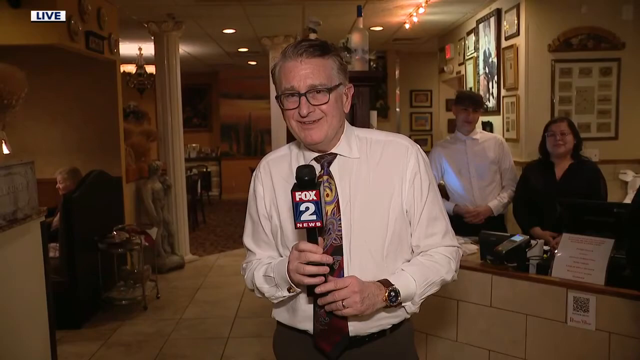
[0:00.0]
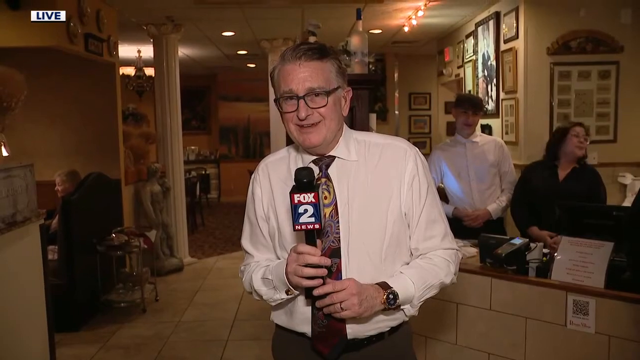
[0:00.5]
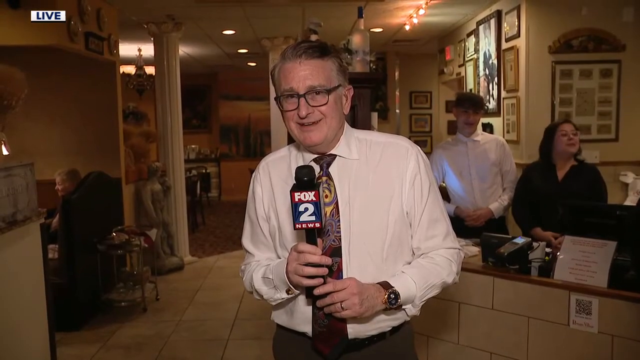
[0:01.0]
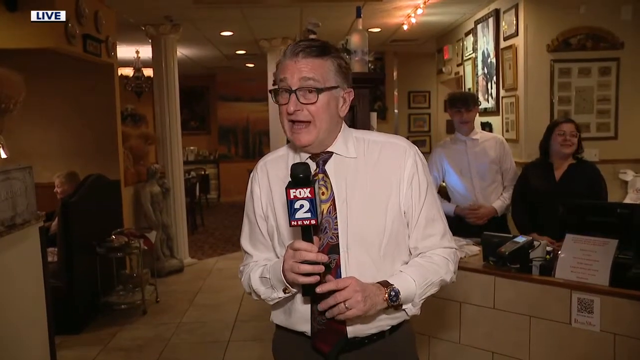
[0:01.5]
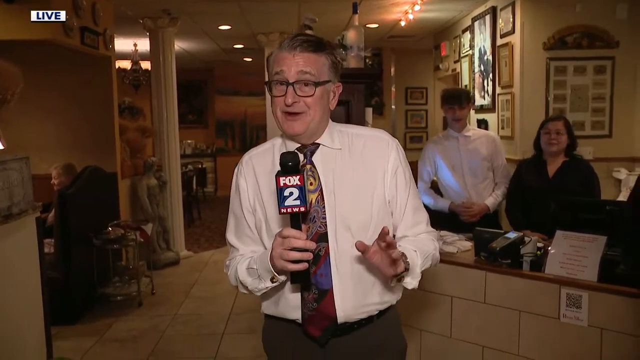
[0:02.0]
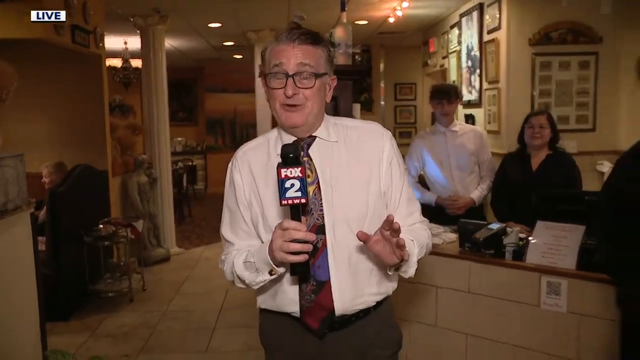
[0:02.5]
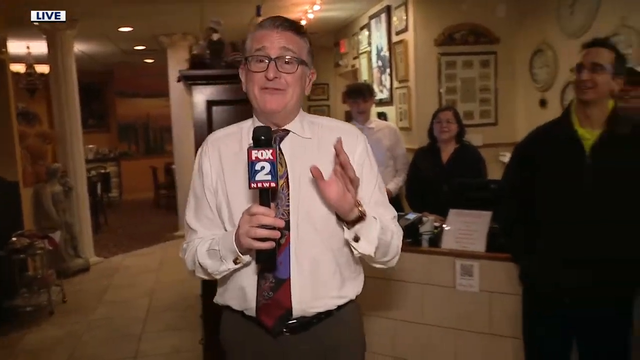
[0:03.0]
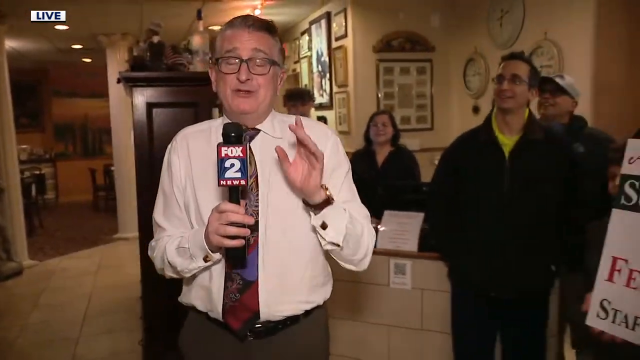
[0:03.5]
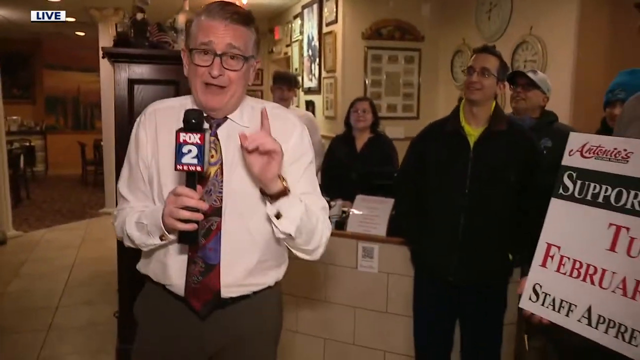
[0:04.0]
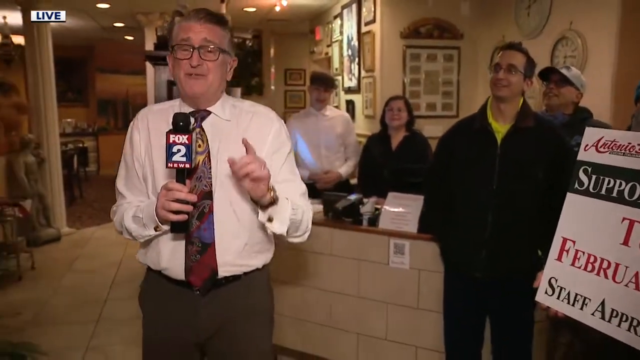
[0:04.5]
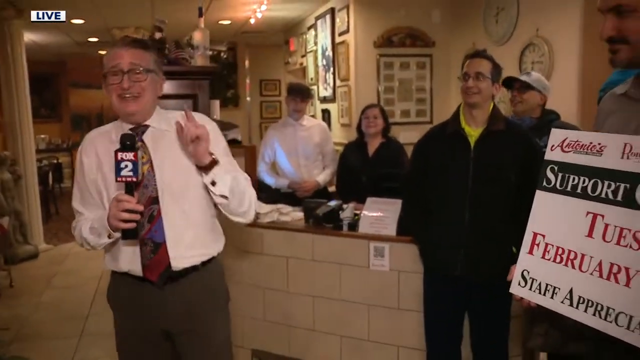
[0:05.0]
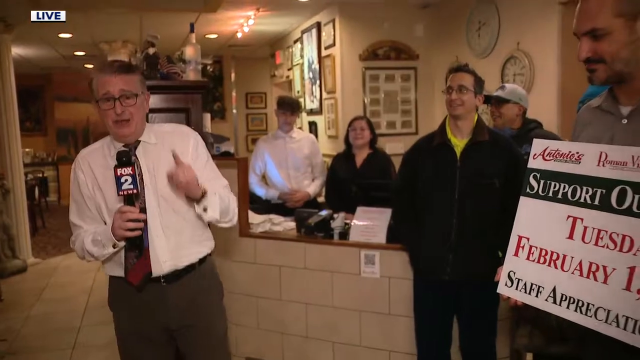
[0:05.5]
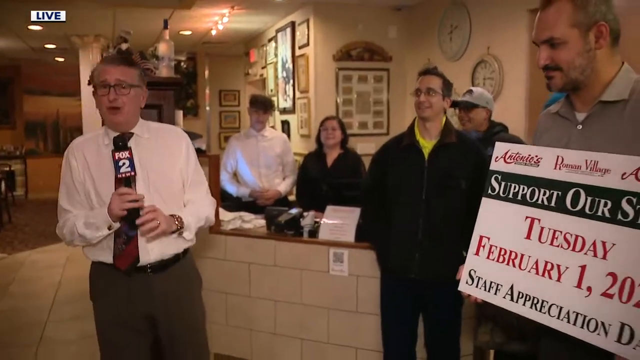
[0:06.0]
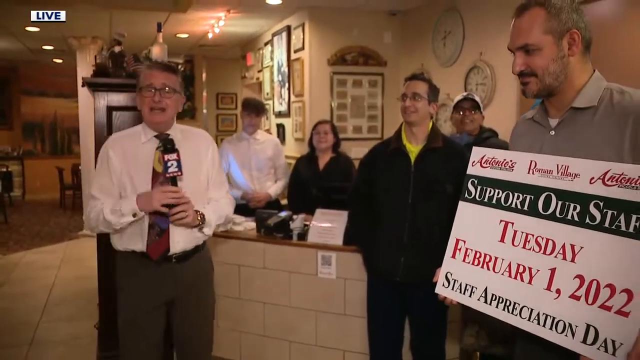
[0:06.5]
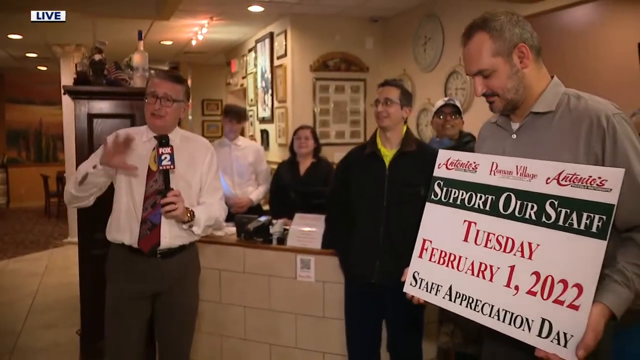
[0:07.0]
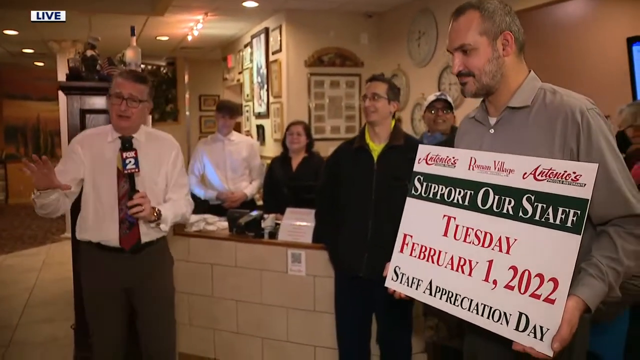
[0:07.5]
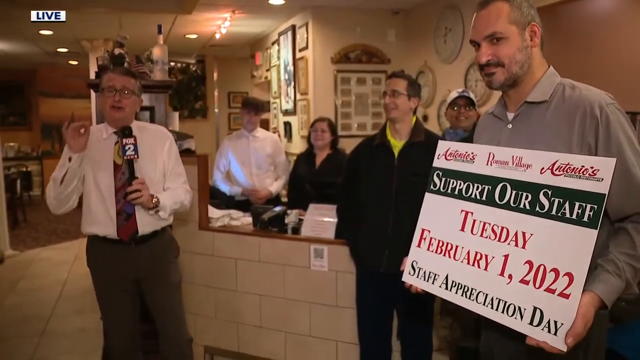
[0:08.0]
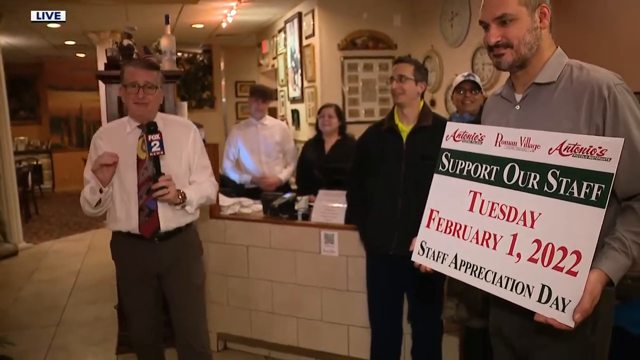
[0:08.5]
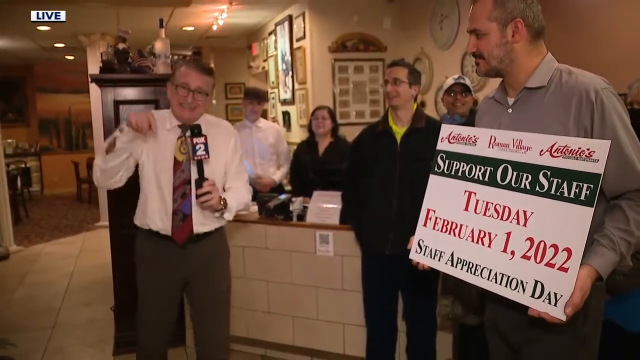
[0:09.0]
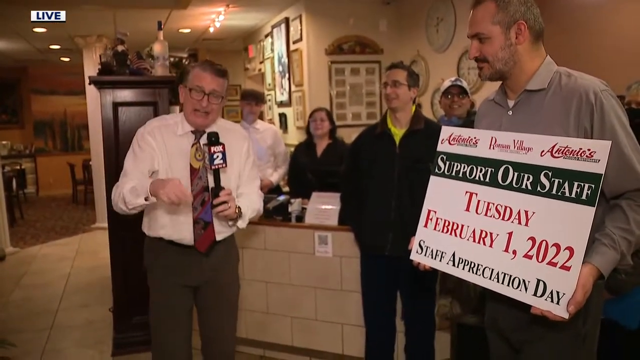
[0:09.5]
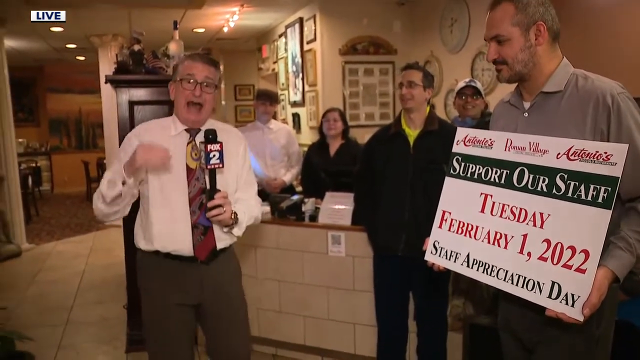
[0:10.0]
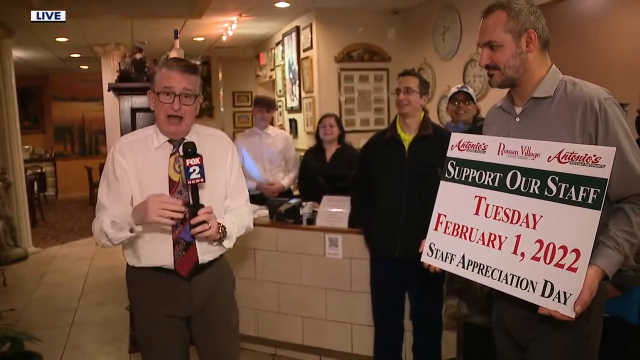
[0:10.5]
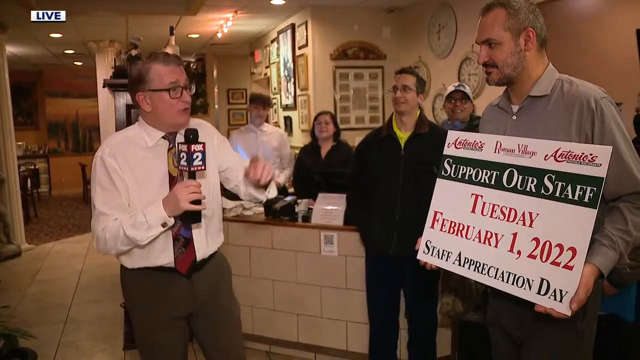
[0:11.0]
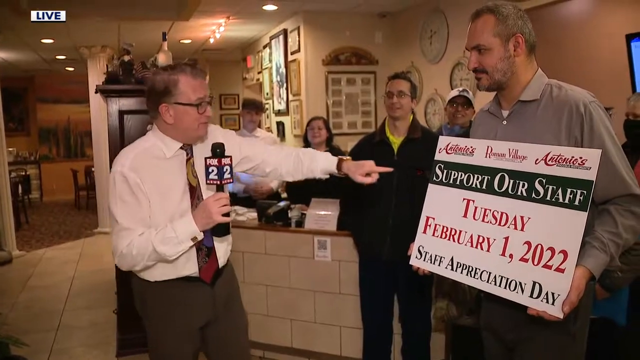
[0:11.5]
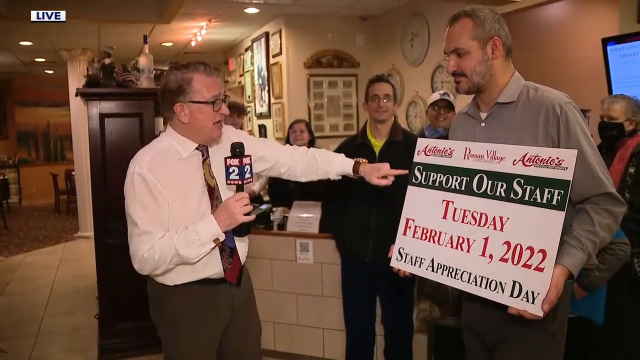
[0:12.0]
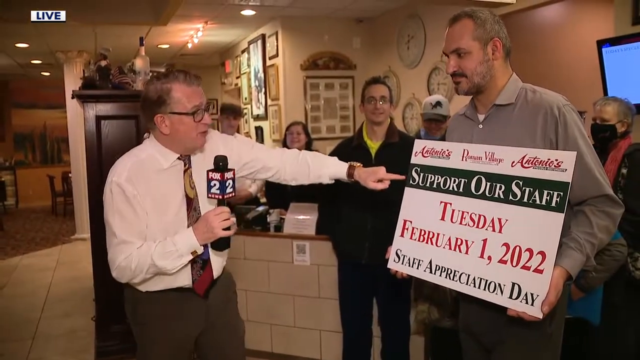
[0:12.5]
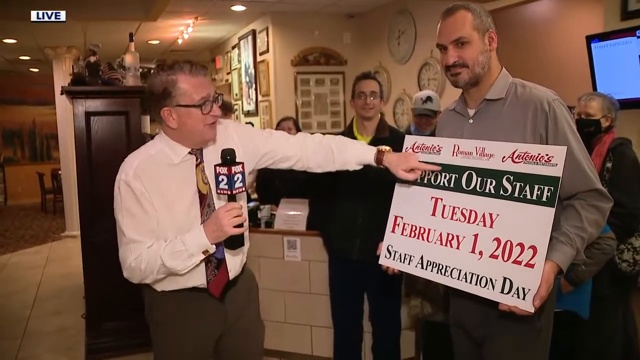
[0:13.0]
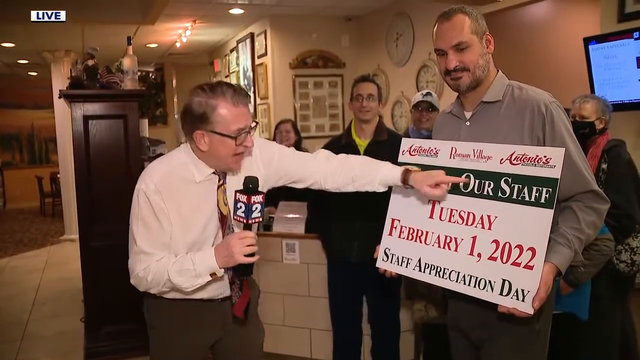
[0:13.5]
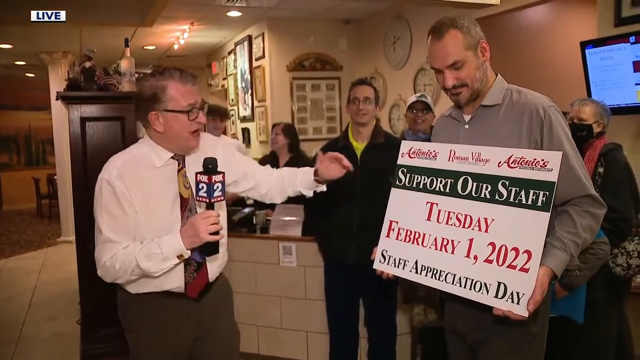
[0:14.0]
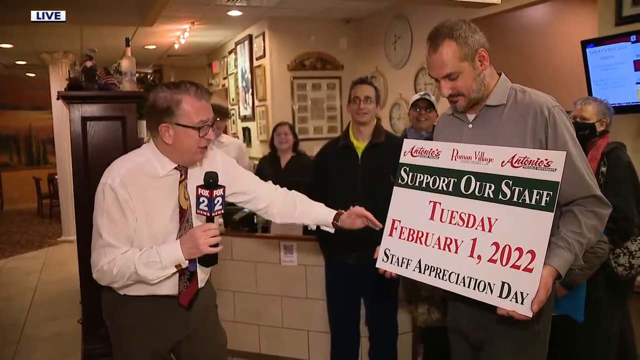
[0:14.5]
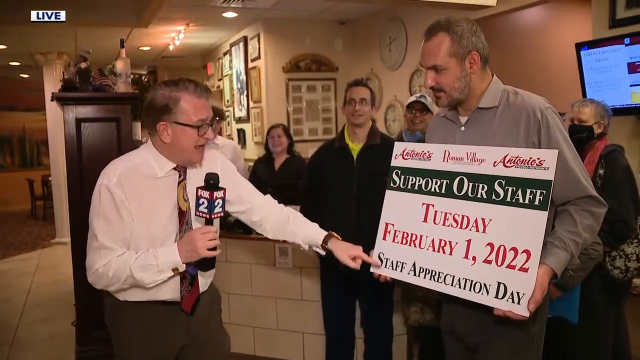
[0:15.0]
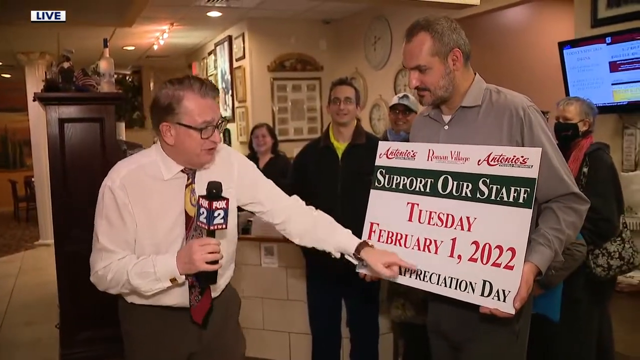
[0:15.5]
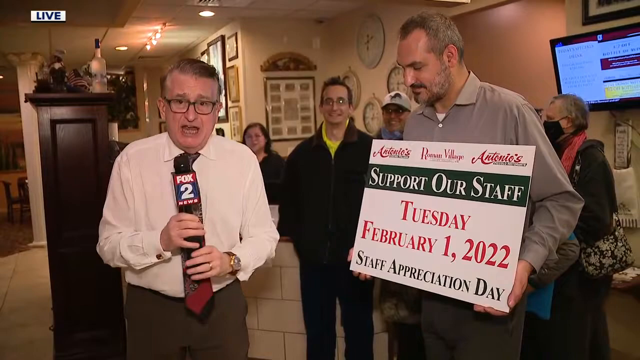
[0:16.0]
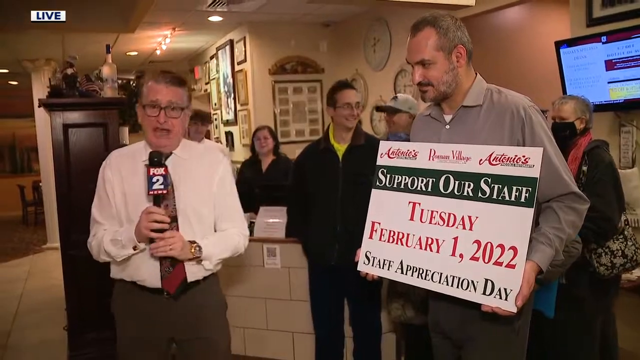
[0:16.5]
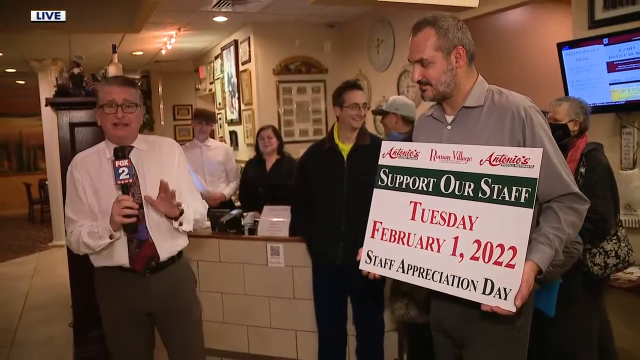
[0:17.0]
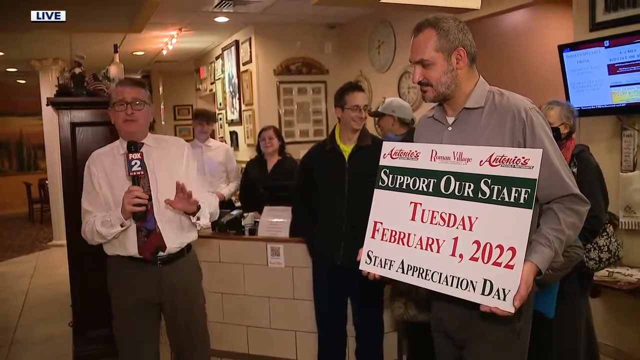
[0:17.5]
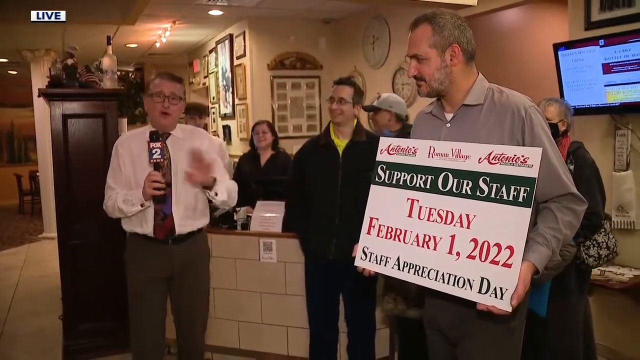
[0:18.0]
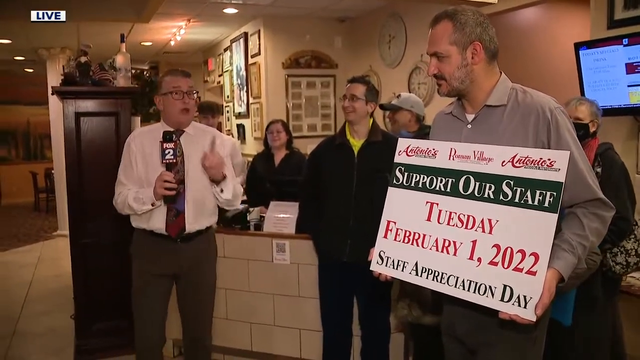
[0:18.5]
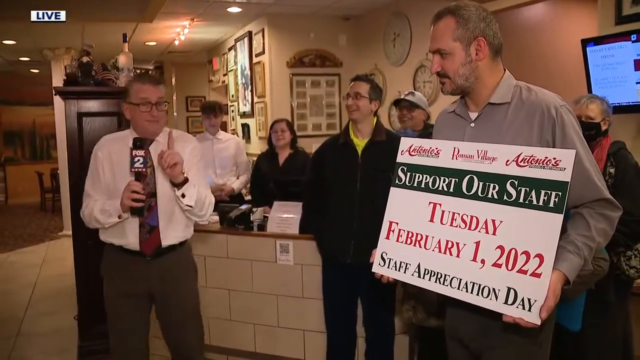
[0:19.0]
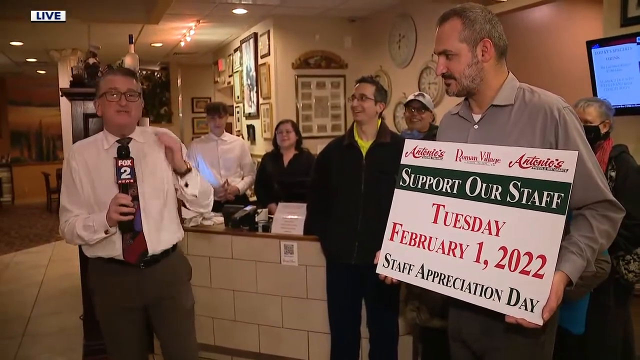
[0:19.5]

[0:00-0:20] An older white male reporter working for Fox 2 News is inside what looks like a restaurant, wearing a white shirt and a tie. He stands next to a group of people, and a sign says "supporters staff Tuesday February 1st 2022"; it is for staff appreciation day. The inside has a kind of homely setting, with several clocks and framed items along the wall. A few people stand behind the counters: a young man in a white shirt and, next to him, an older woman who is fairly short and a little heavier set. Several tall men are up front, and the tallest one holds the sign; he has a gray shirt, short salt-and-pepper hair, and a trimmed beard and mustache. The interior has what is sort of like white wallpaper, the flooring looks like tile, and there are some columns. On the left side of the screen, some people sit at a booth.